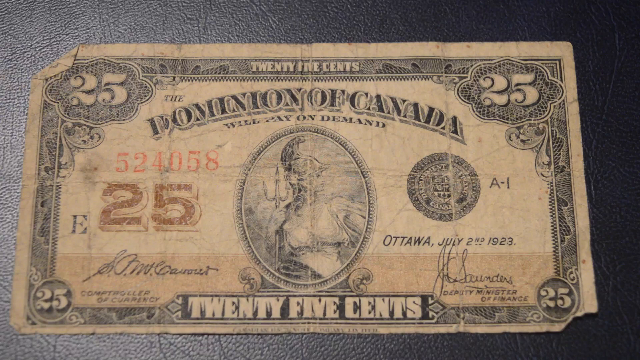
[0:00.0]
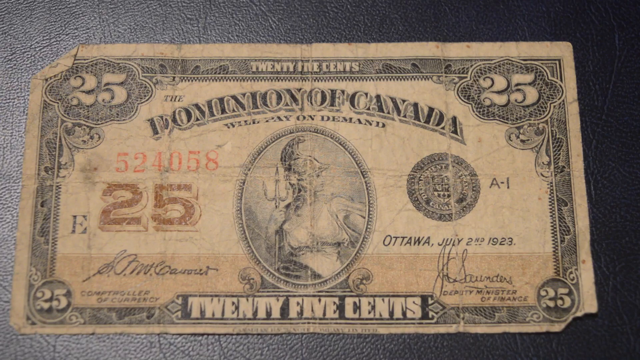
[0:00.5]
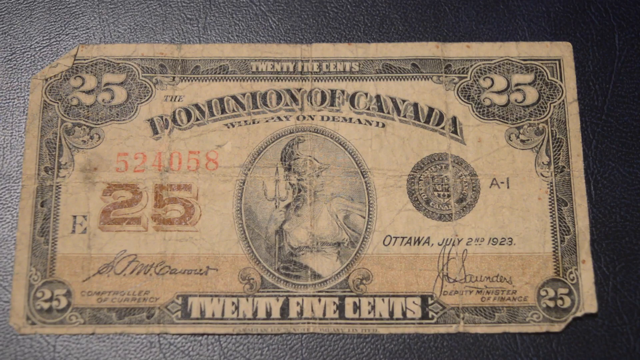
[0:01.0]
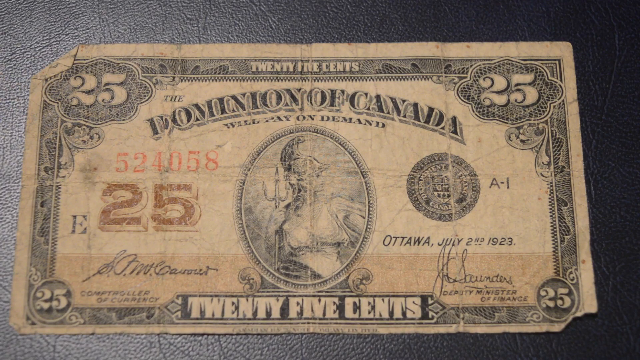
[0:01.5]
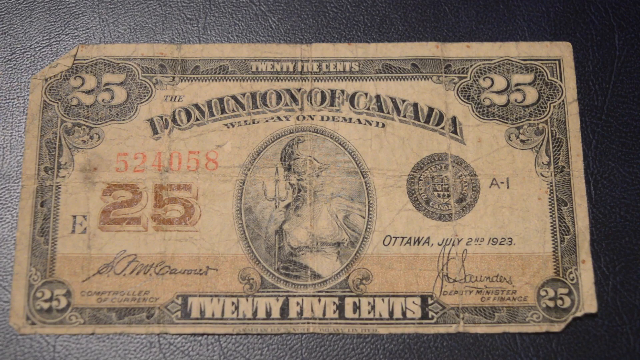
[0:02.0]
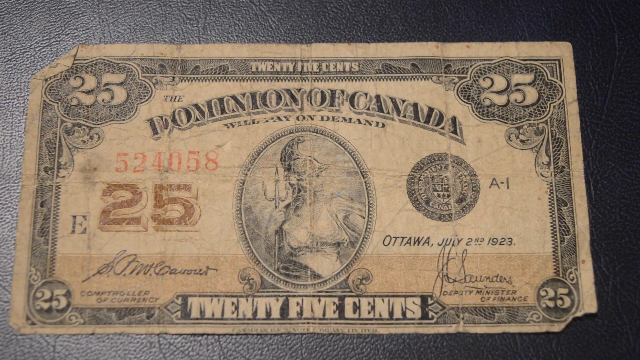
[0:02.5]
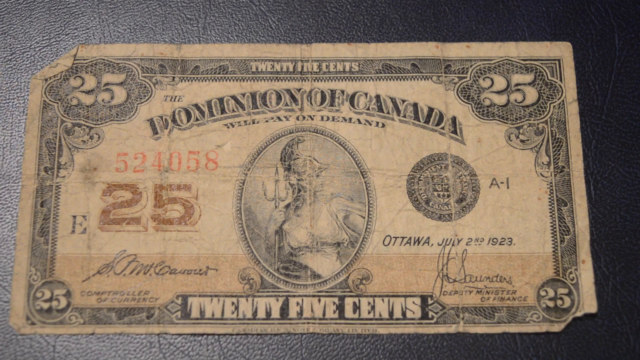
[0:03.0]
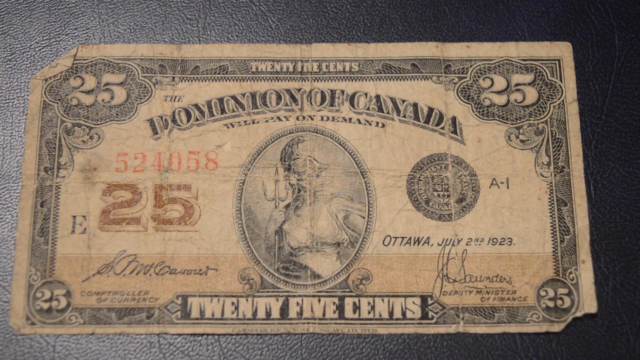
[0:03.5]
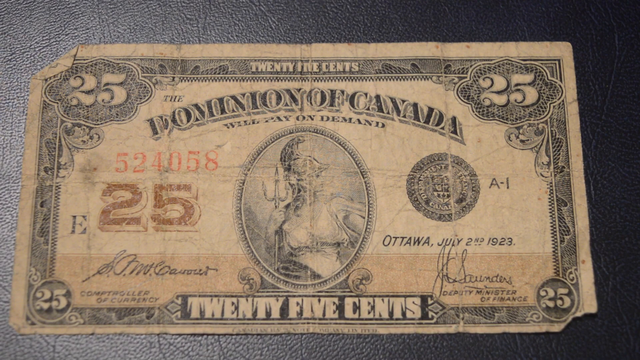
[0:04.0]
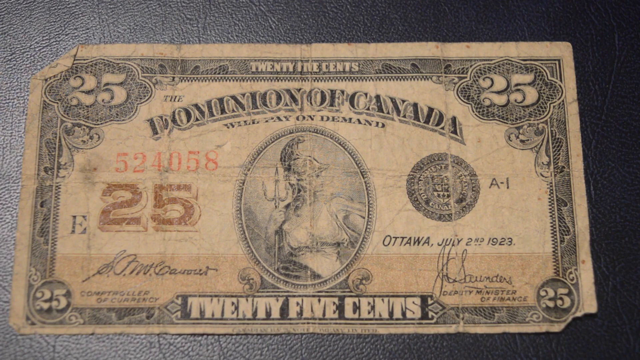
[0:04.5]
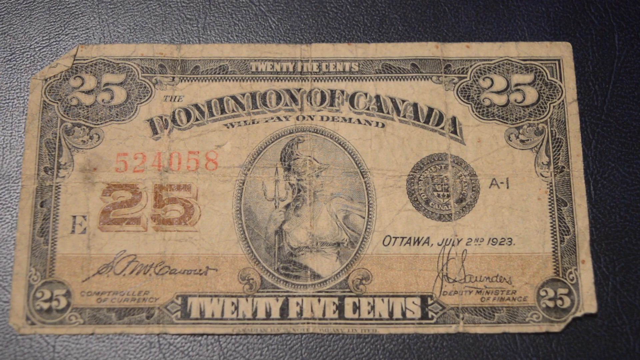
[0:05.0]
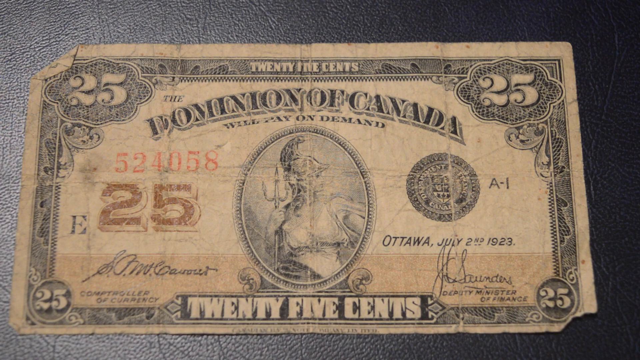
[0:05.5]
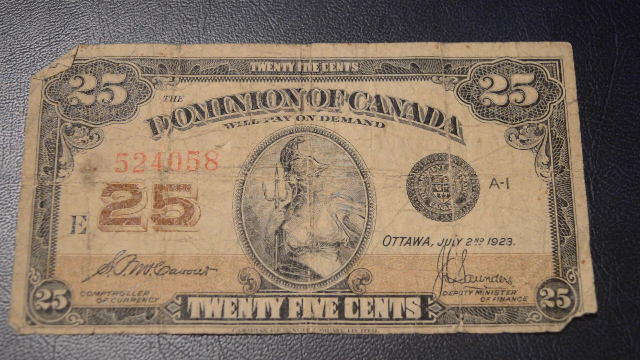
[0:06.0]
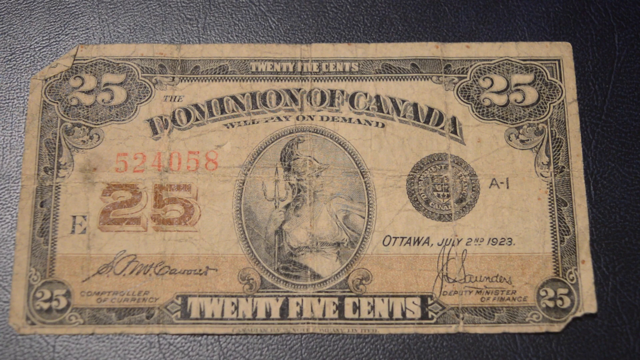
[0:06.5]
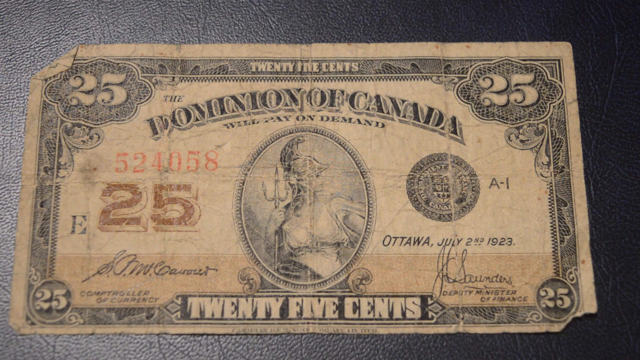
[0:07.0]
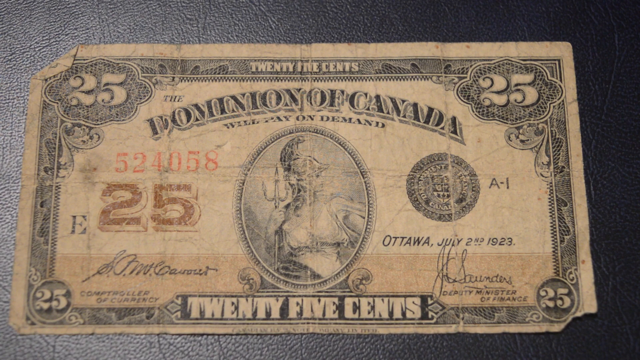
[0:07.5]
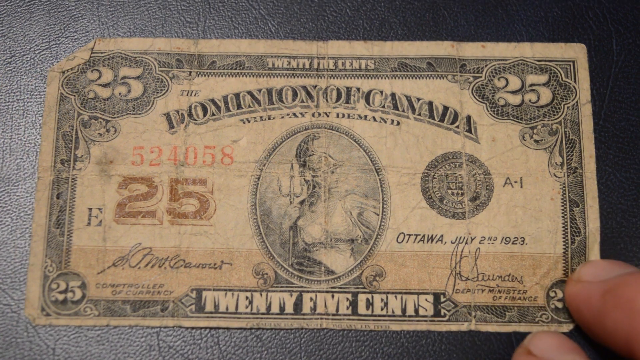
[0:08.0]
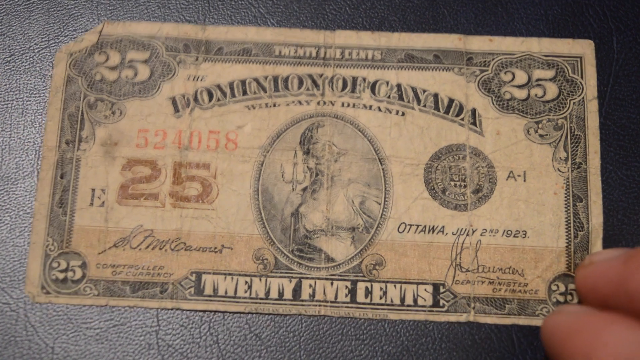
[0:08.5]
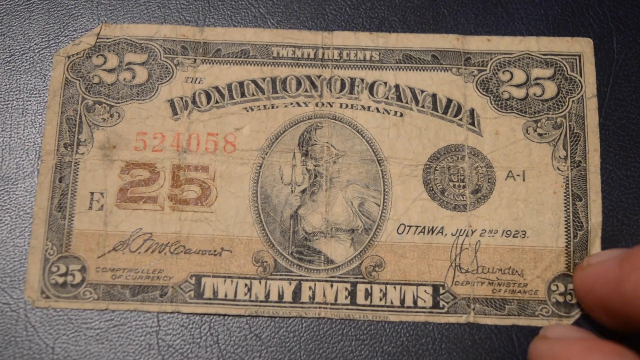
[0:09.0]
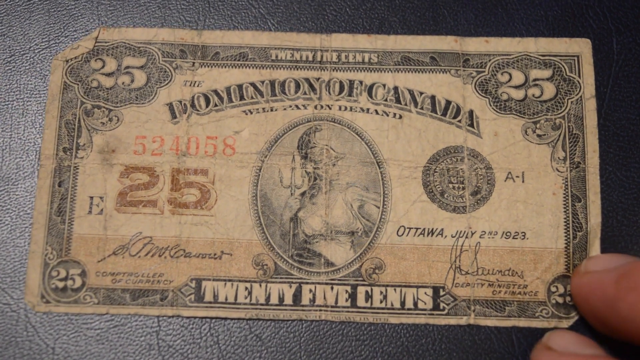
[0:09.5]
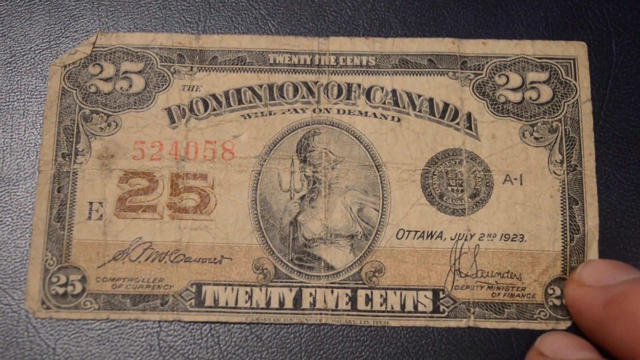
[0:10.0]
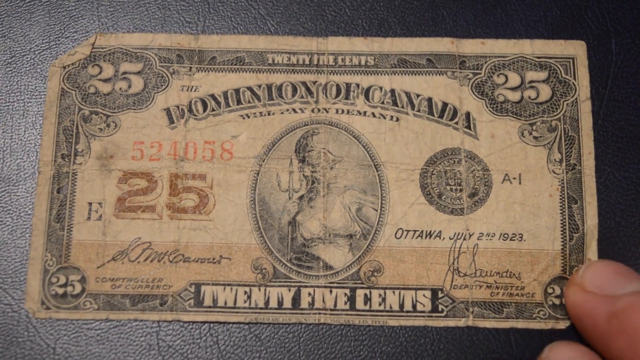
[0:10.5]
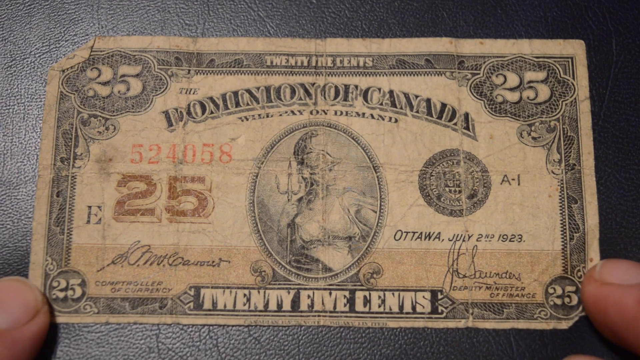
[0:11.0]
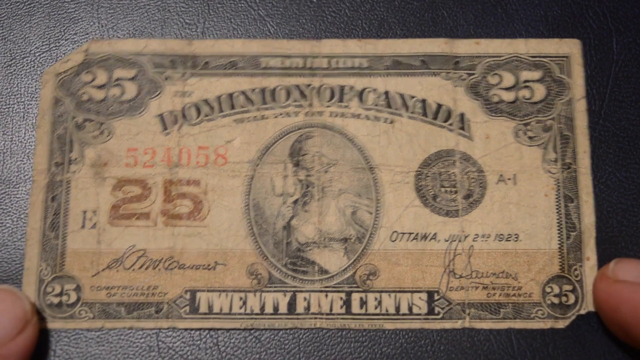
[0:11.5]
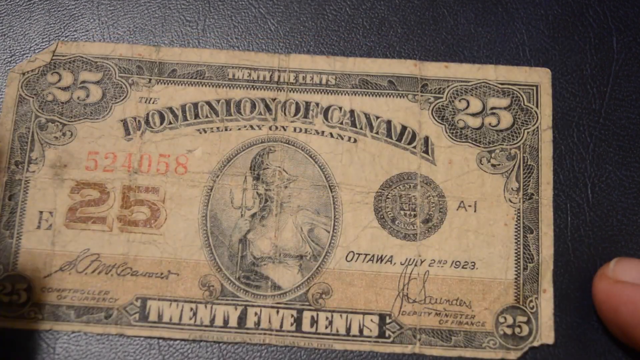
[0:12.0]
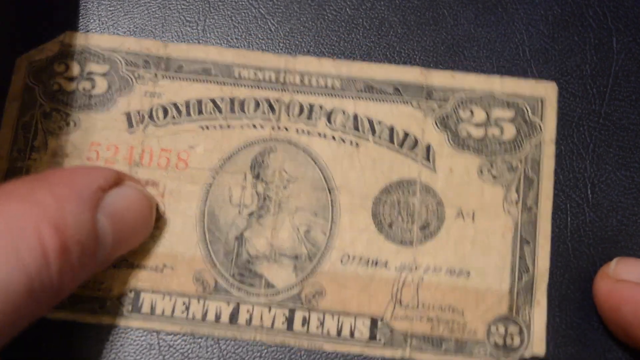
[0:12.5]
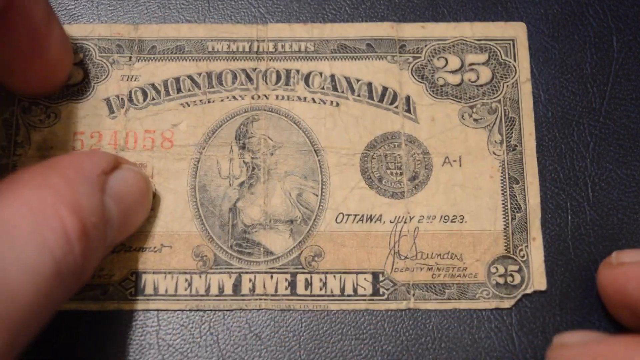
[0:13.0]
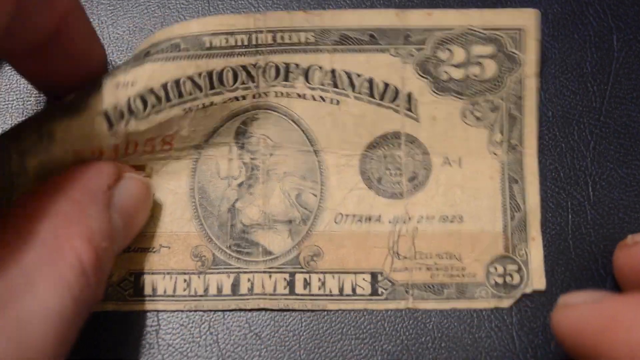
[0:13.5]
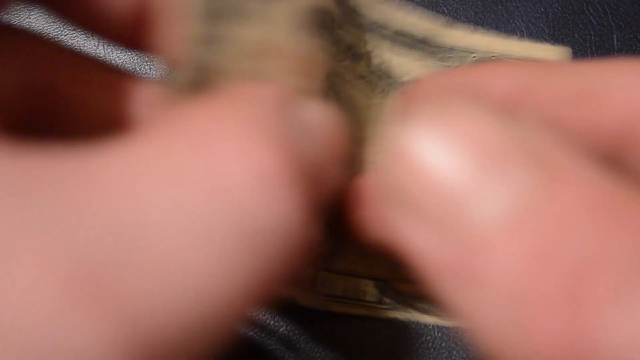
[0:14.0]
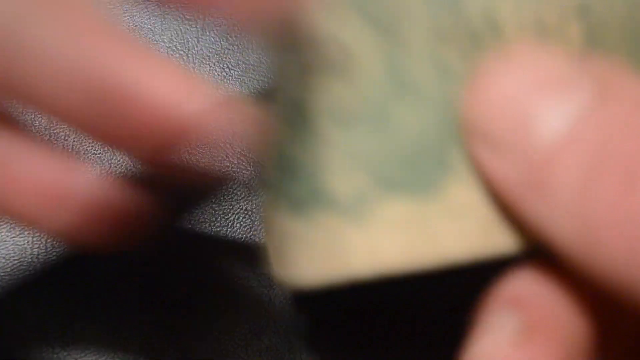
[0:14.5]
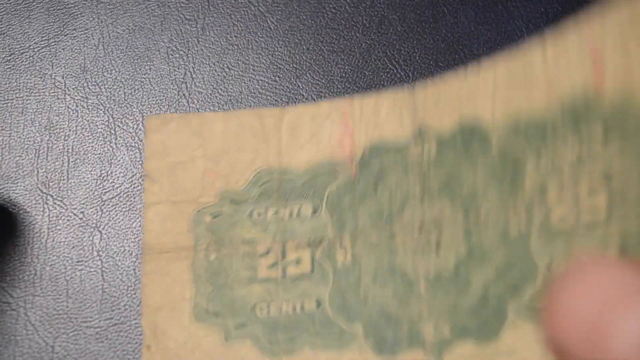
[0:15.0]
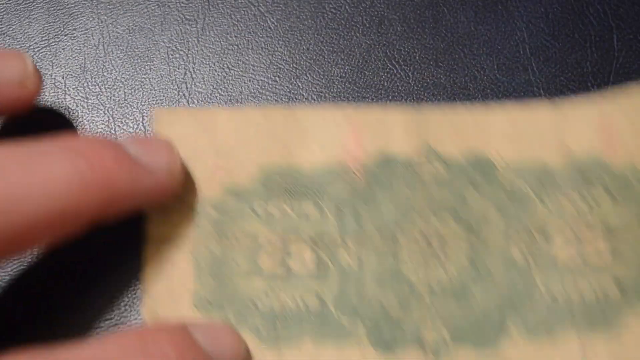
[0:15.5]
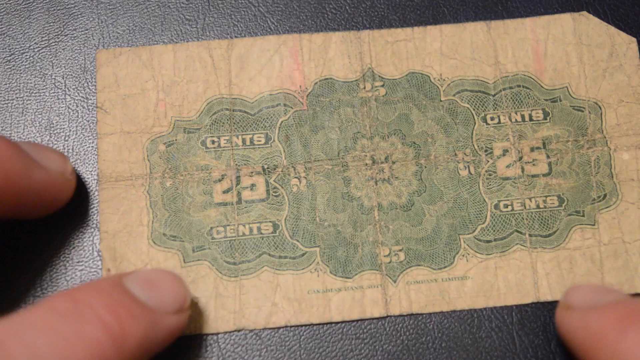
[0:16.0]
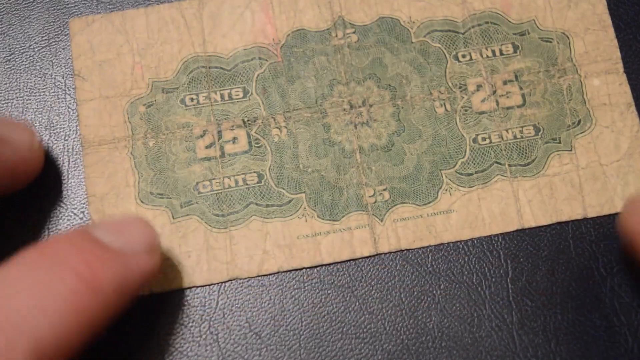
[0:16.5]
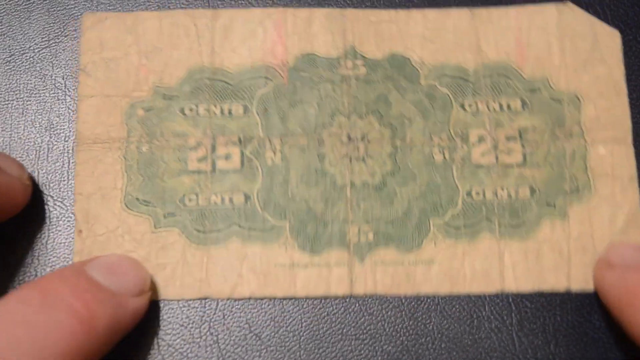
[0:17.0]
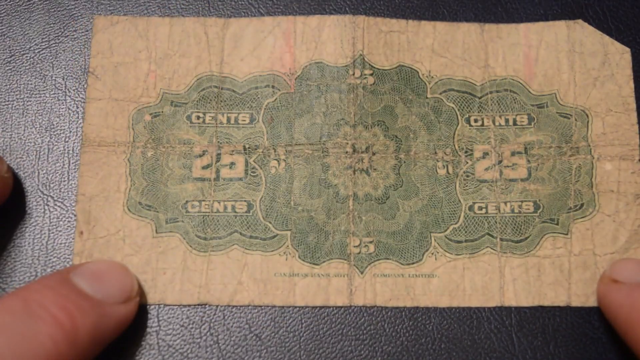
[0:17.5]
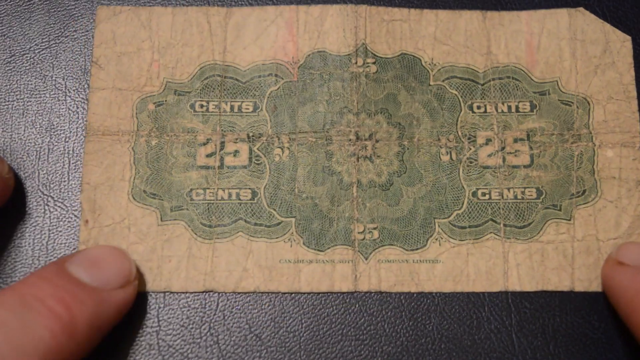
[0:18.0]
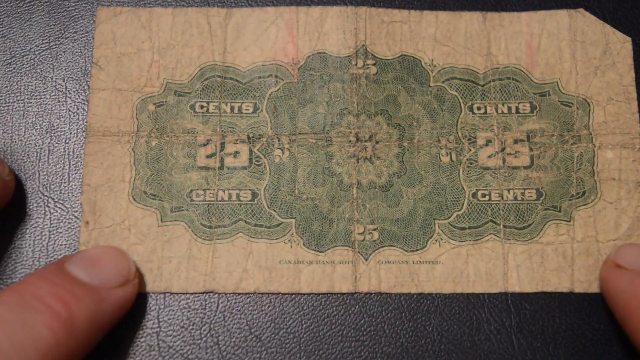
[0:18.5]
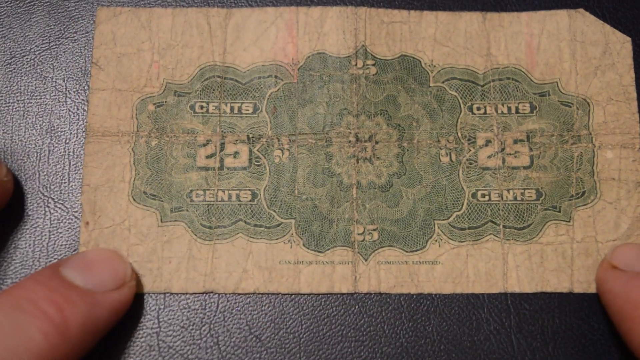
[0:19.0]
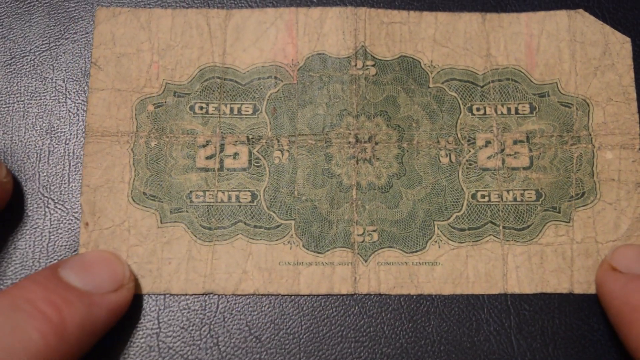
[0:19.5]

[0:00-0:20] A 25-cent Canadian paper bill is displayed. It is beige, in light and dark shades of beige, and the word "cents" appears on it several times; "25 cents" is written all over the bill, on both the front and the back. A man's hand is briefly visible, kind of brushing the bill and flipping it upside down. In the middle of the bill there is a woman with a pitchfork looking straight ahead, with a kind of circular motion to her.